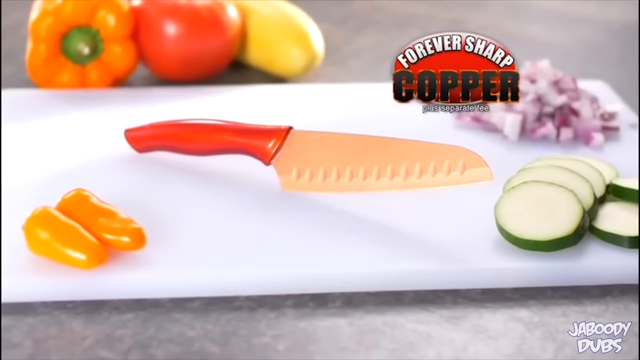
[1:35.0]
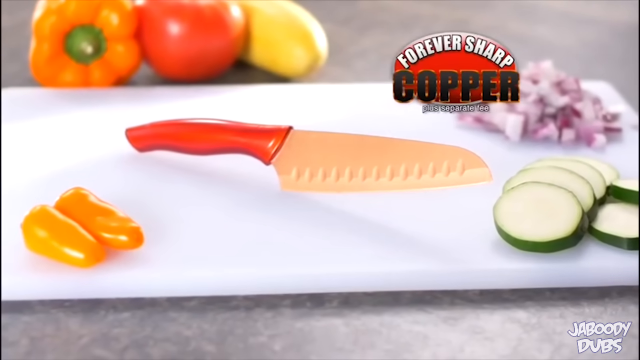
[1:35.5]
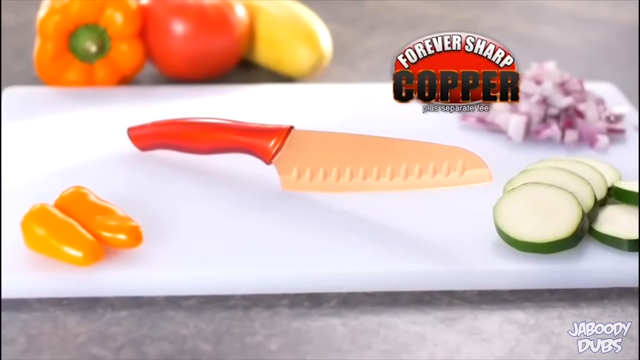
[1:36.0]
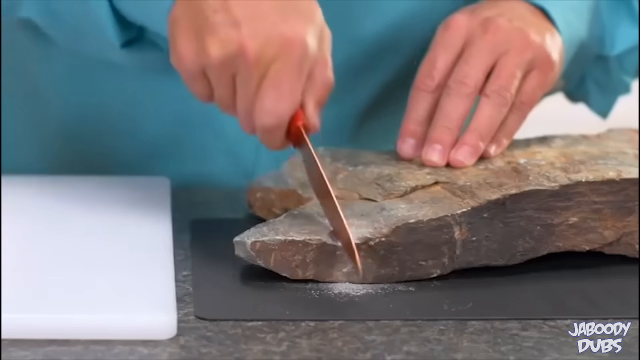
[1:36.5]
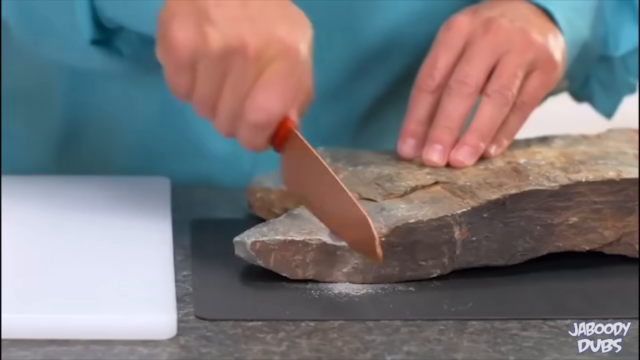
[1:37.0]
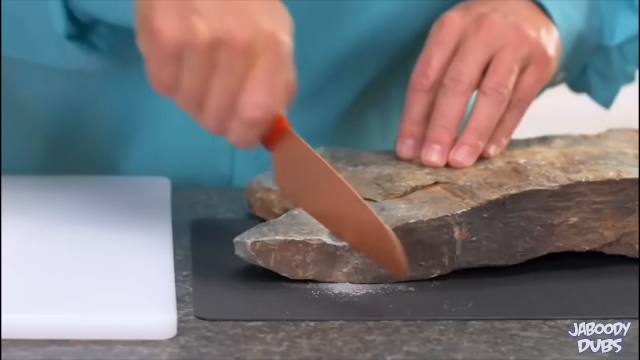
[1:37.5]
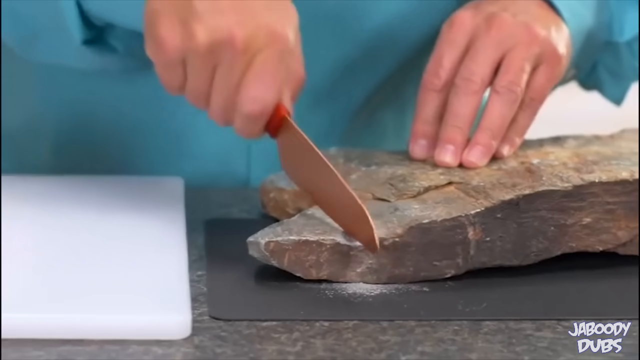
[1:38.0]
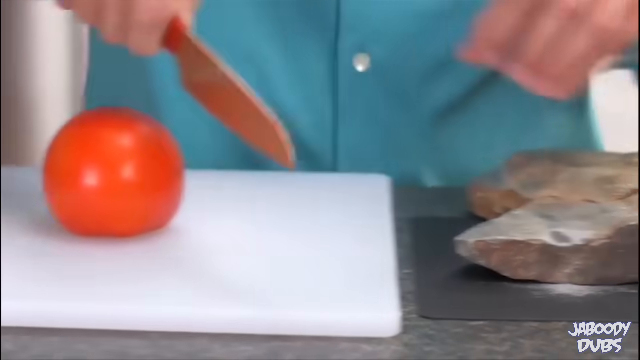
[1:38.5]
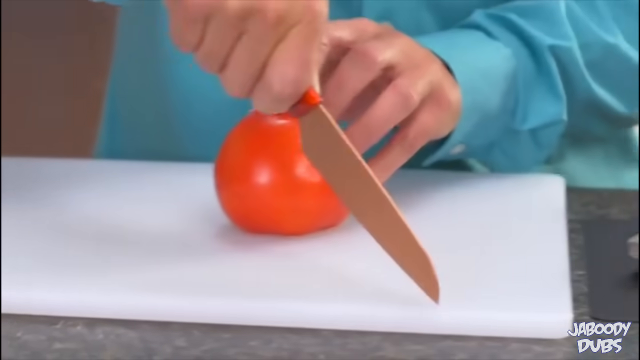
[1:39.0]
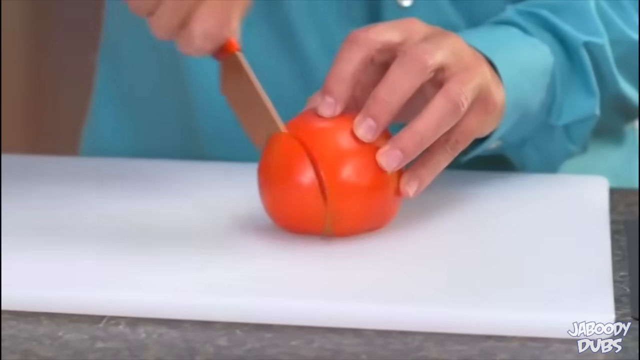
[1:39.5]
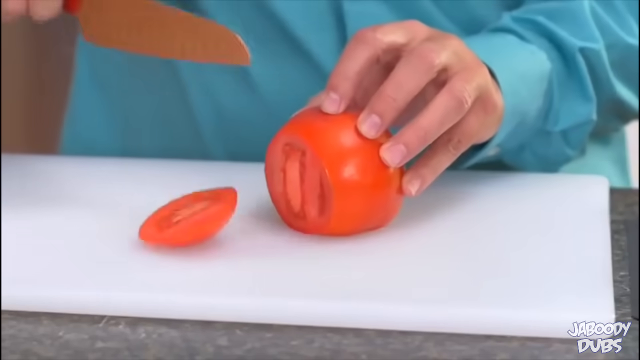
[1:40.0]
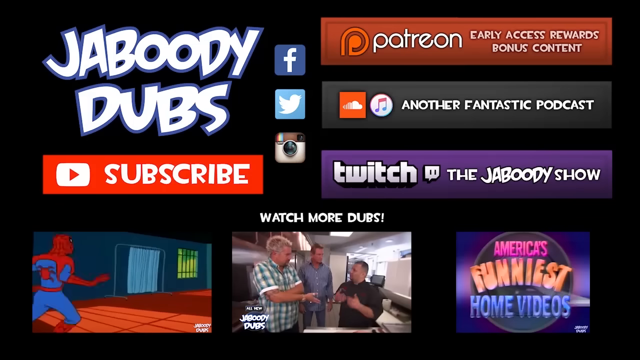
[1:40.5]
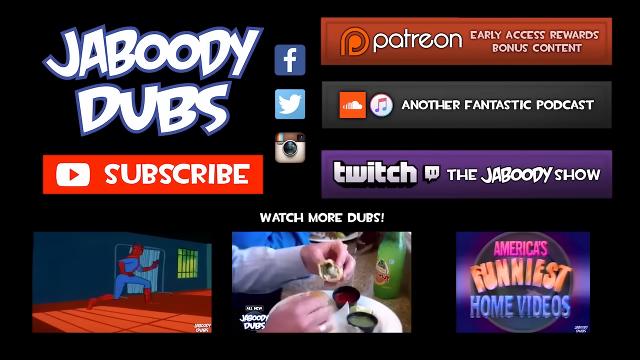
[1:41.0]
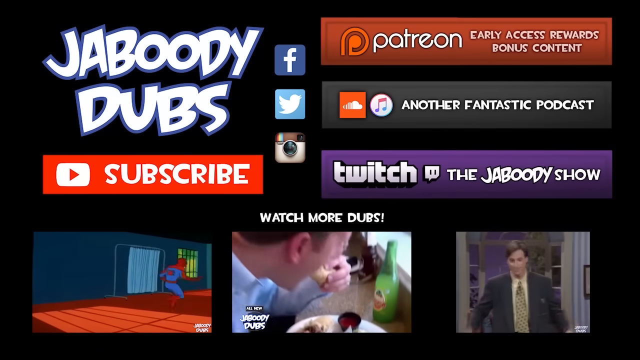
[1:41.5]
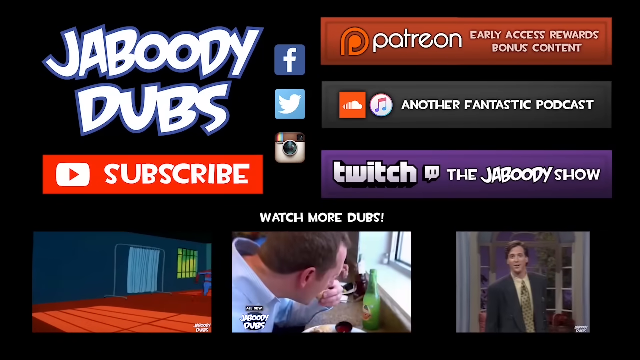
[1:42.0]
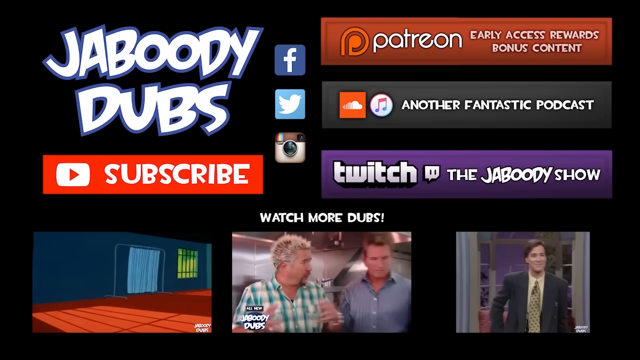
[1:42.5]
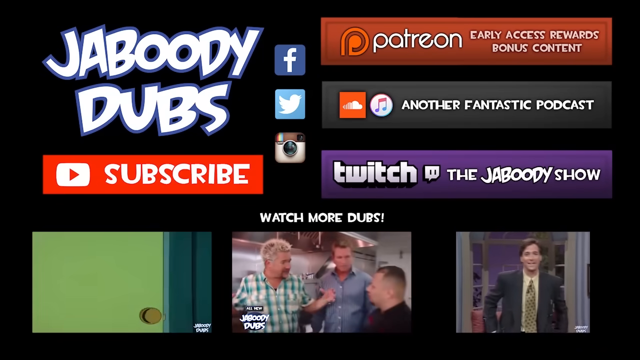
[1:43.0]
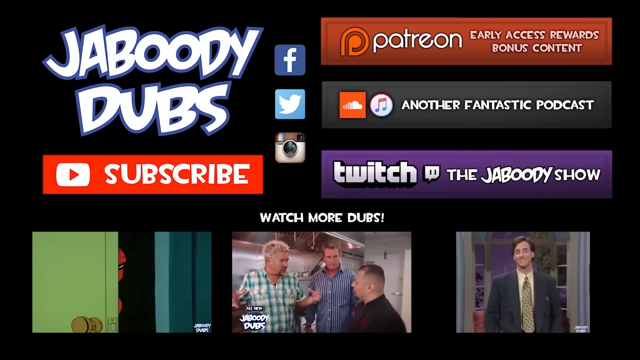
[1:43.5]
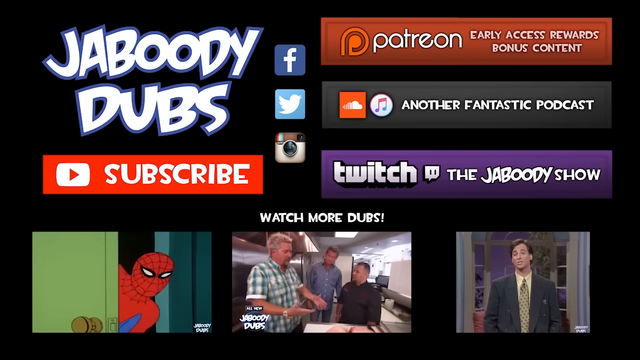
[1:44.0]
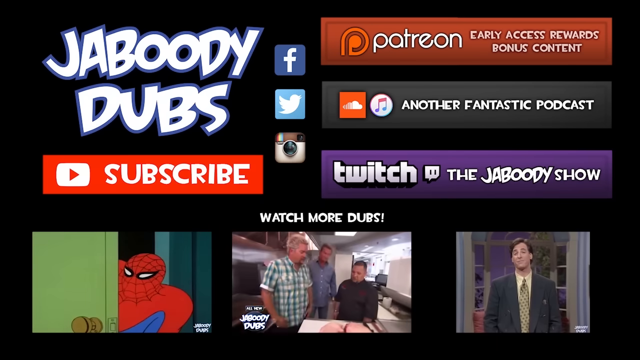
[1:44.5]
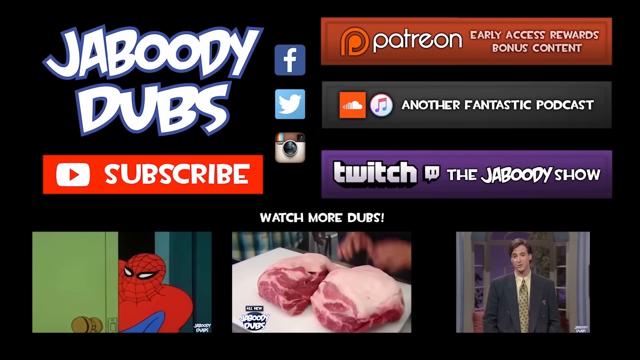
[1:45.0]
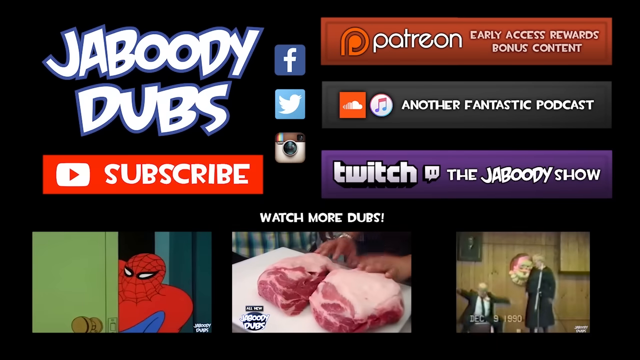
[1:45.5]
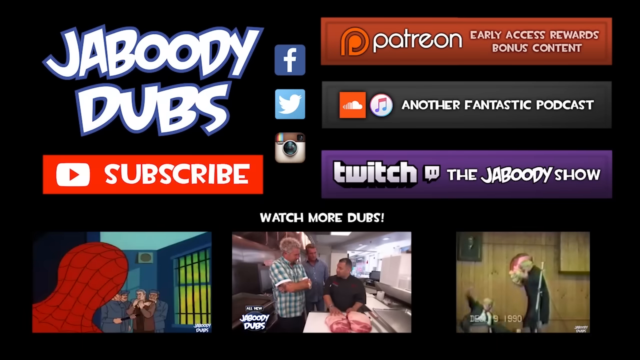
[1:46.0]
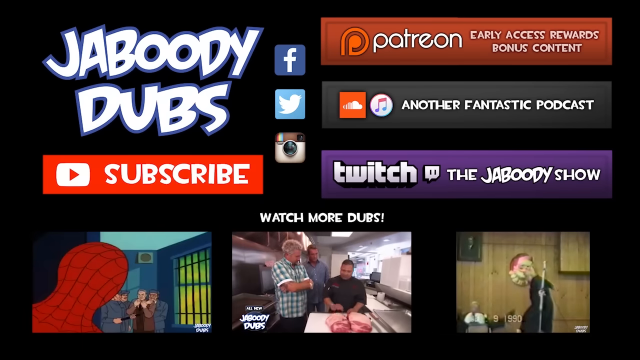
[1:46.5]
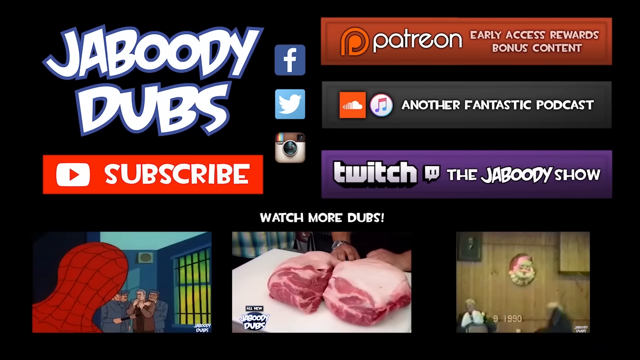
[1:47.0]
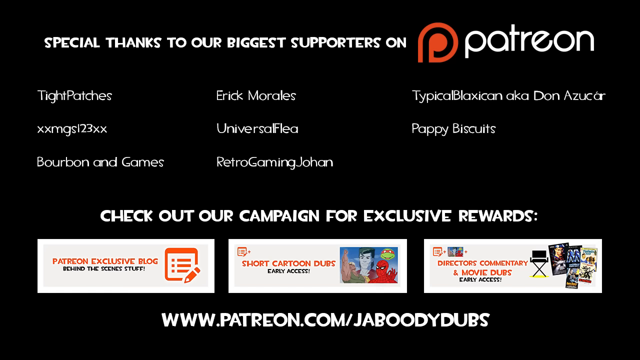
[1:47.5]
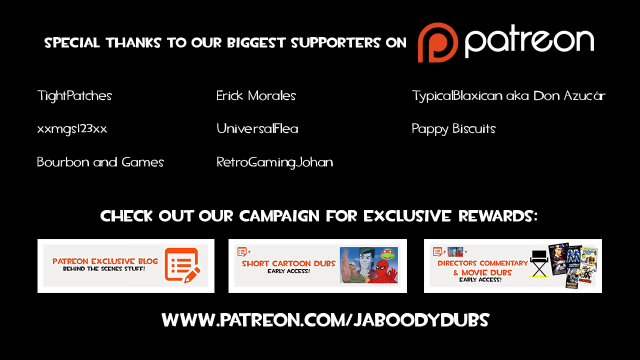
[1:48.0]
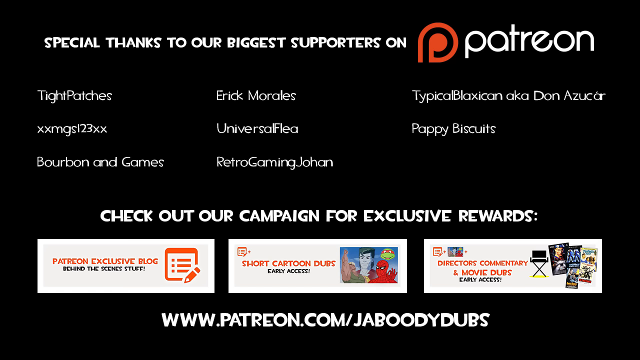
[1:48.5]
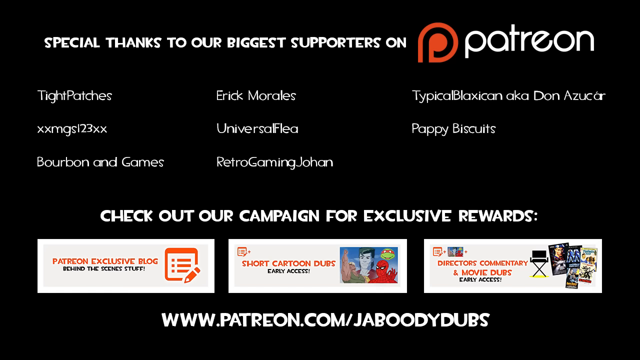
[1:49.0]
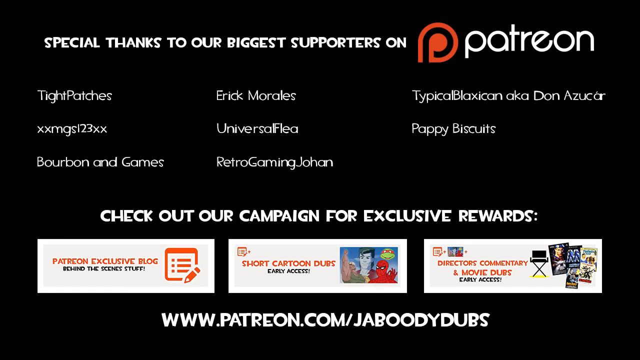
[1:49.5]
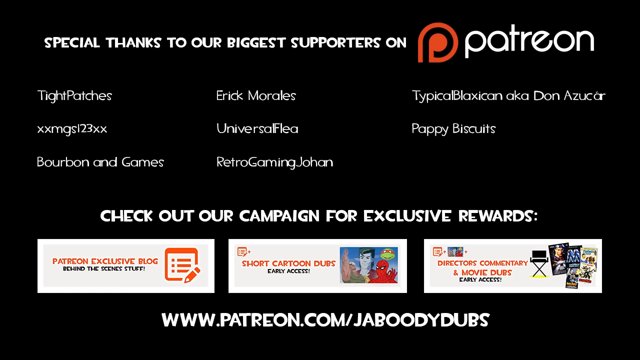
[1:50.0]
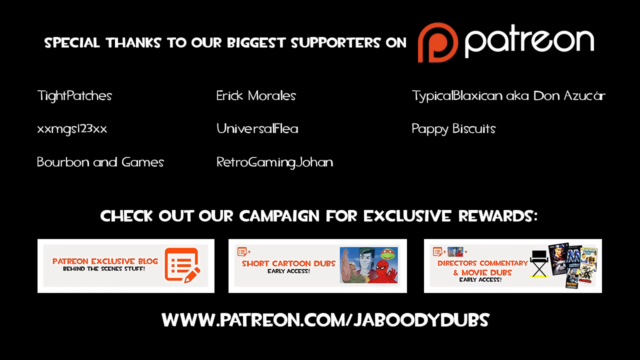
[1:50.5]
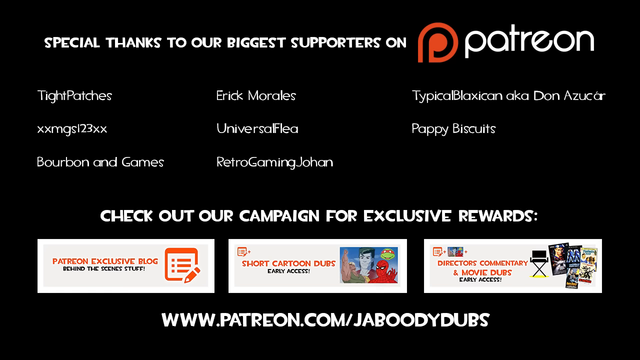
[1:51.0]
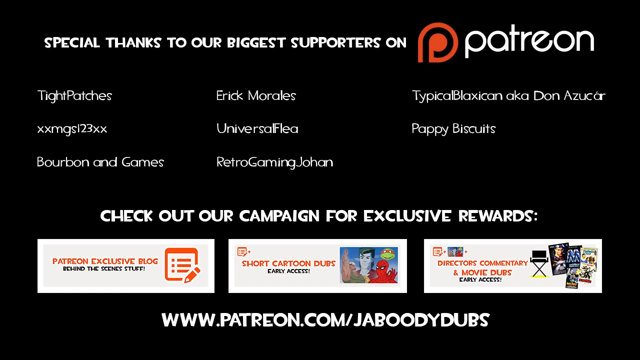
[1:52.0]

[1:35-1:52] A guy wearing what looks like a turquoise shirt holds what looks like a rock in one hand and cuts completely through it with what looks like a copper knife, slicing it as debris comes off the rock. He then goes straight to a tomato on a cutting board and slices it with ease, showing no struggle, demonstrating the knife's sharpness. The video cuts to the knife displayed above a white cutting board holding different vegetables, including a tomato and what appear to be orange chili peppers. It continues to cut back to the guy cutting the rock and slicing the tomato with ease.